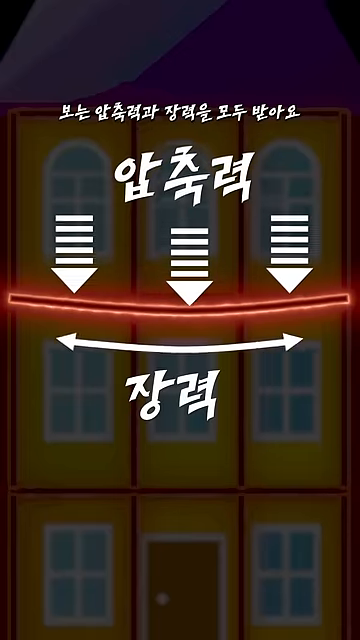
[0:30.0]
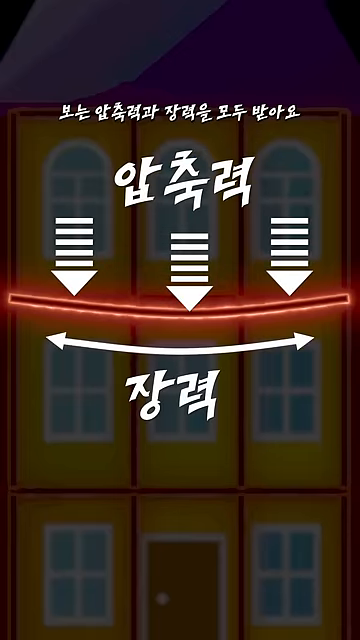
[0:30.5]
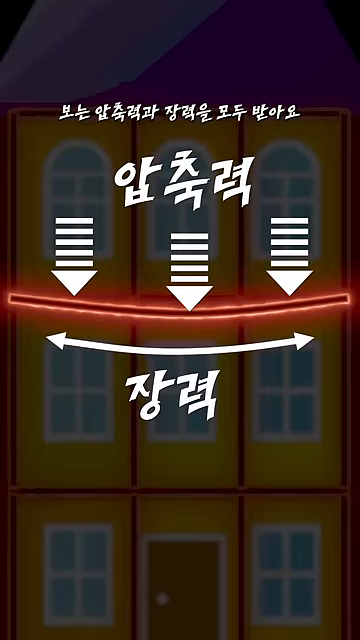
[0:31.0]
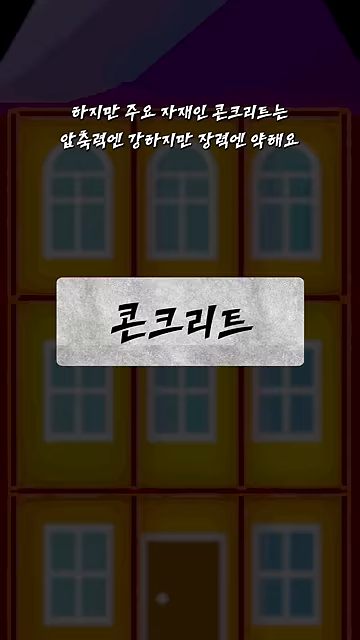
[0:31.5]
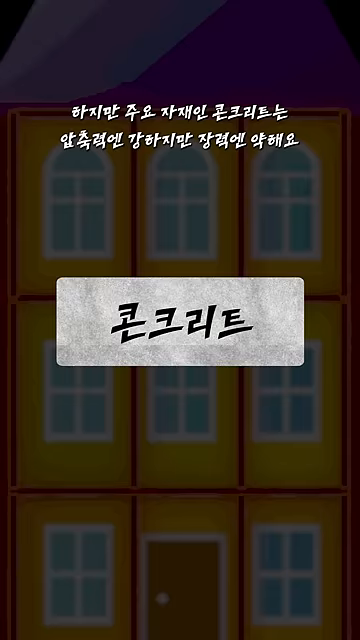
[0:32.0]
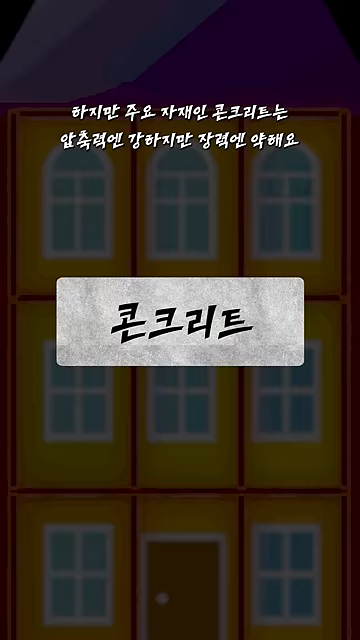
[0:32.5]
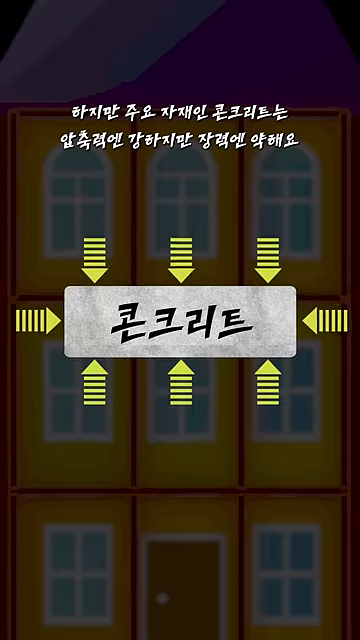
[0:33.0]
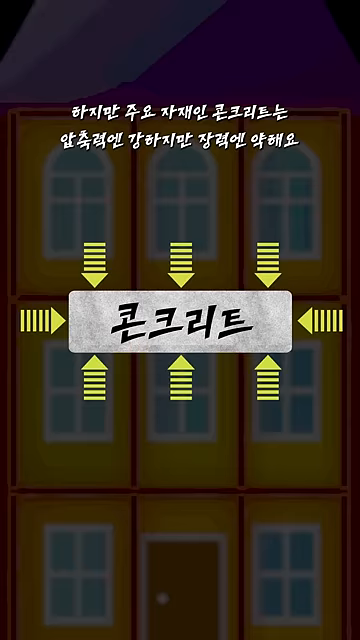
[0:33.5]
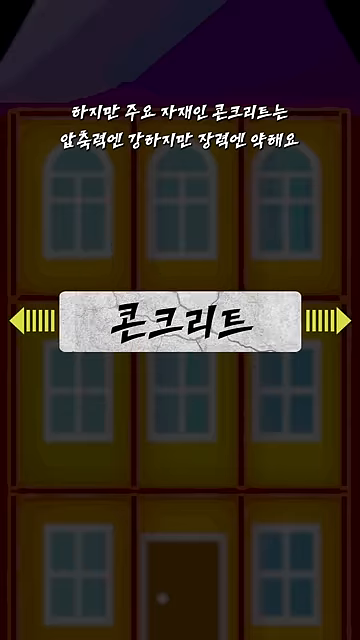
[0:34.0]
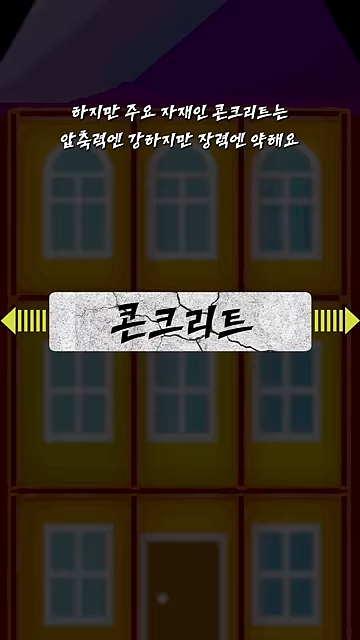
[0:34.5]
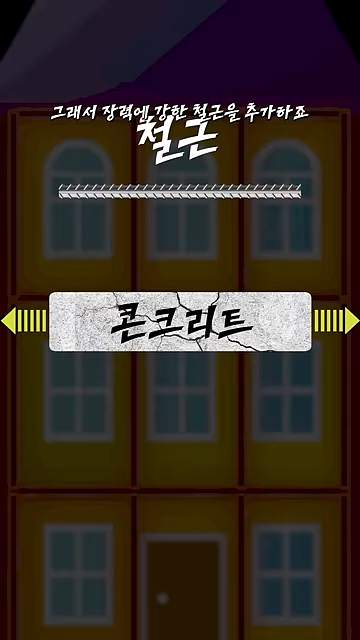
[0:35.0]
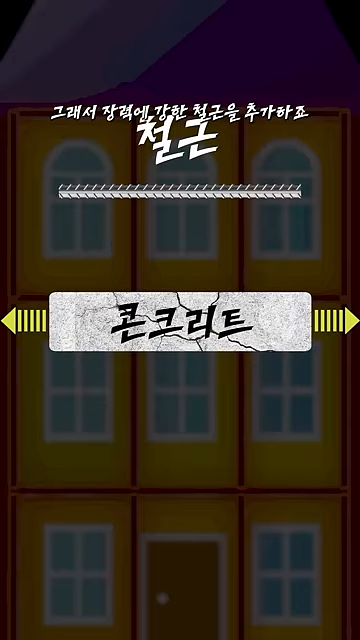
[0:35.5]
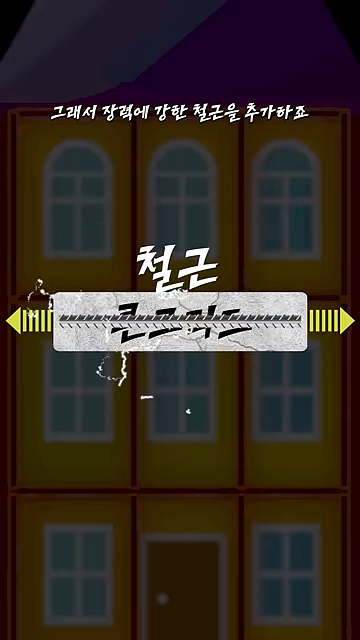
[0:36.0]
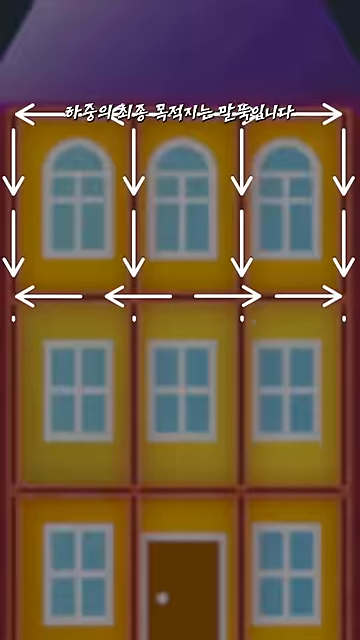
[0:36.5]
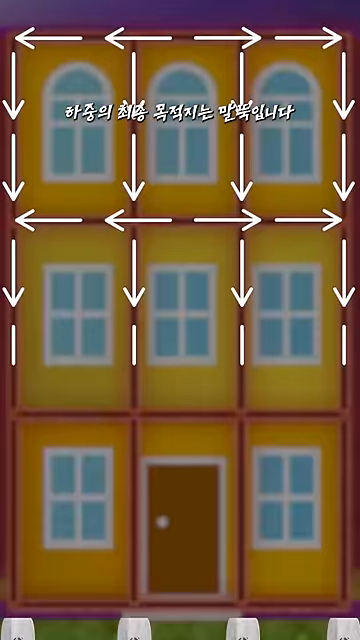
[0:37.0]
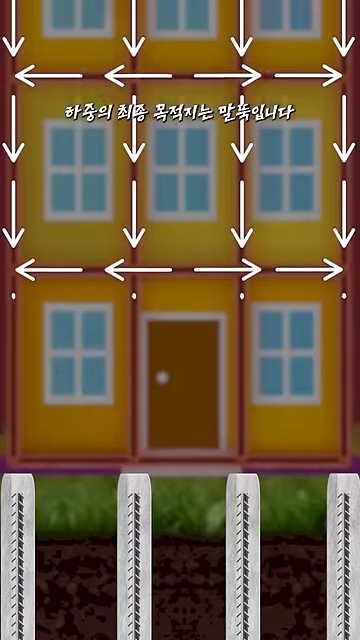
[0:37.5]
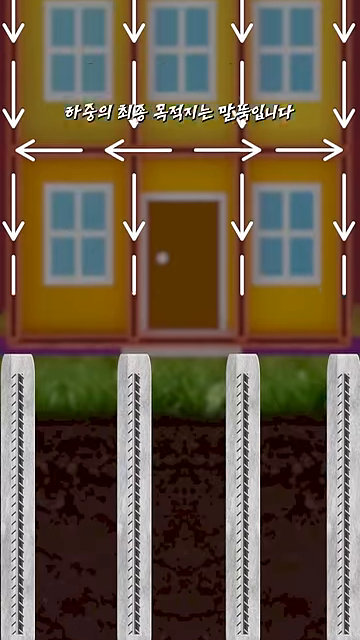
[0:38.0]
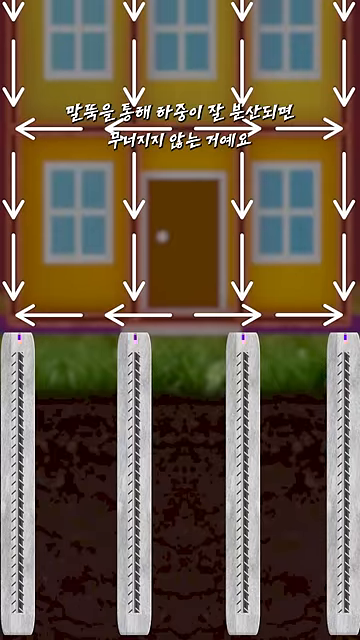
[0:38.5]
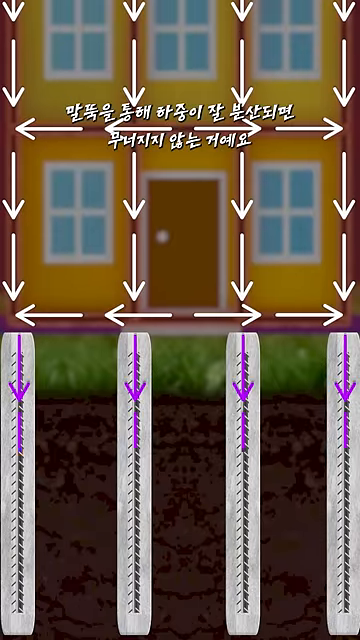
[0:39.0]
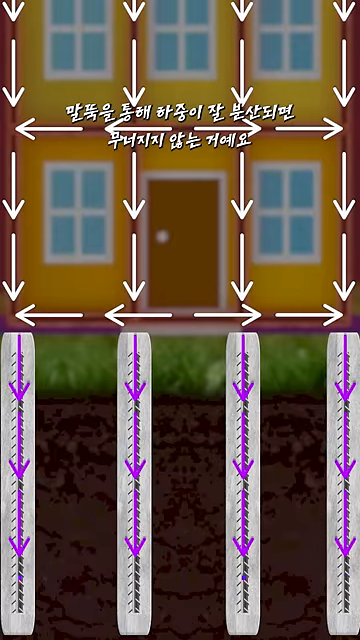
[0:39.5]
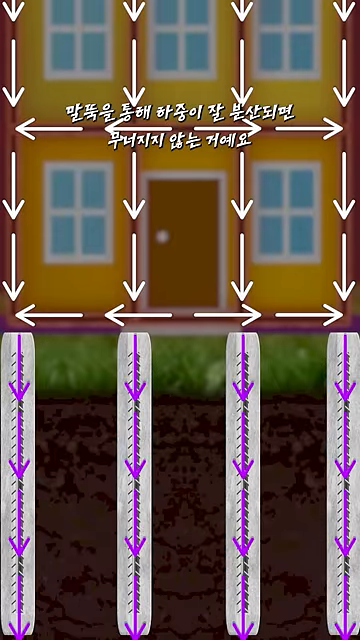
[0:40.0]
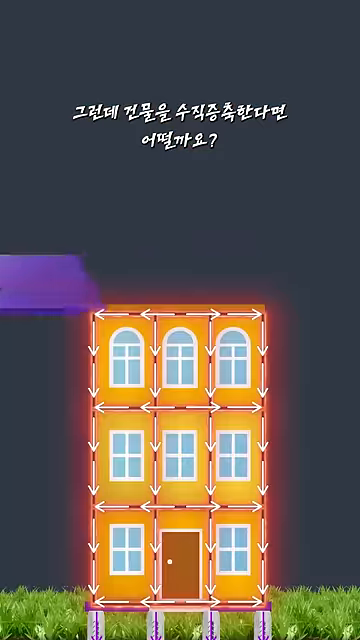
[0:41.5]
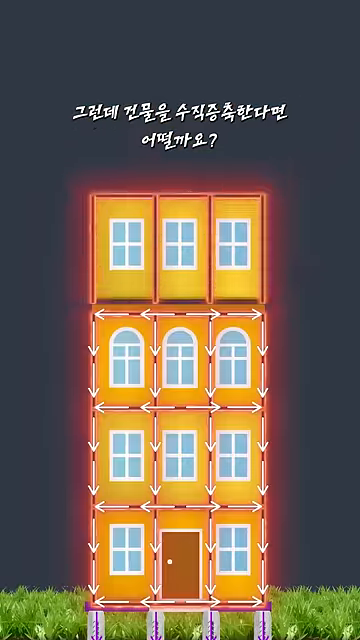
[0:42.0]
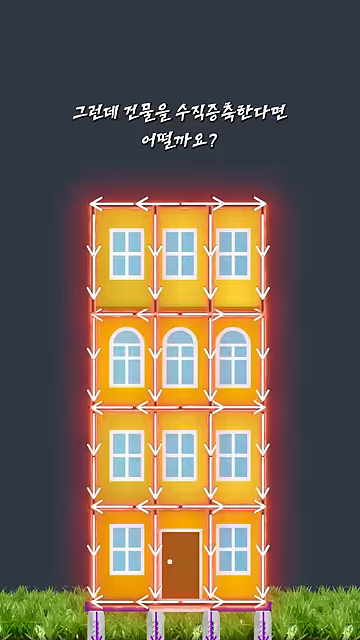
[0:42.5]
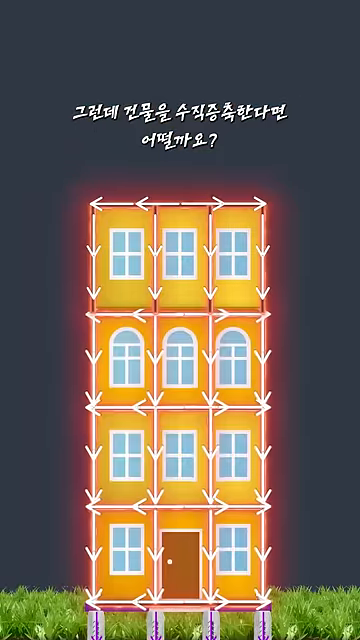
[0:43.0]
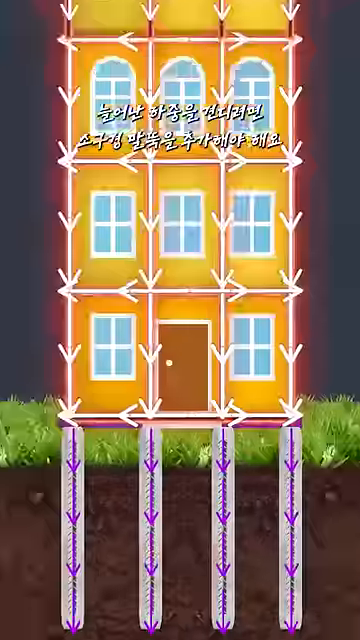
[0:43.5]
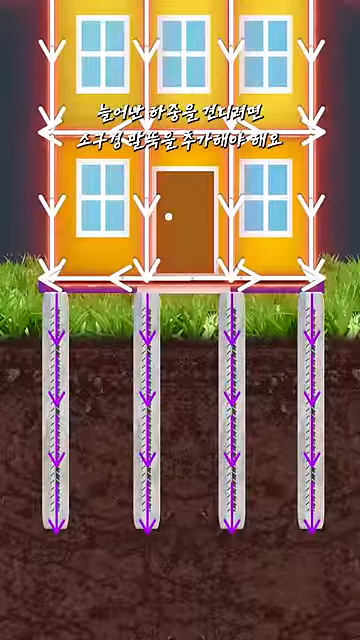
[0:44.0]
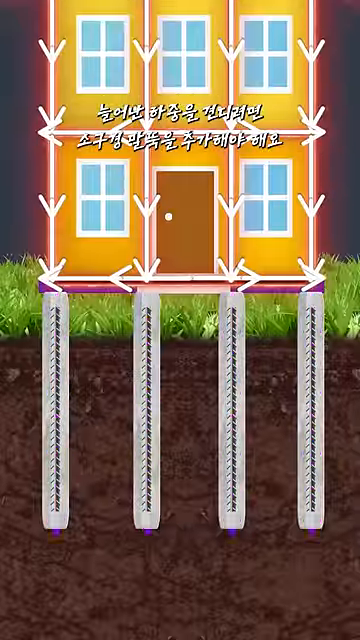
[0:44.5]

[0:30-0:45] The building is shown with how much pressure is exerted by each floor and the constraints that seemingly must be considered to expand it with additional construction. The view cuts to the underground portion of the building, looking at its construction and supports. Various arrows show where the pressure is exerted, with purple arrows on the bottom half, along with the materials needed to reinforce and distribute the load. The video then asks what happens when expanding the building vertically, and shows another floor being added to the building along with the new pressure exerted by the extra floor.